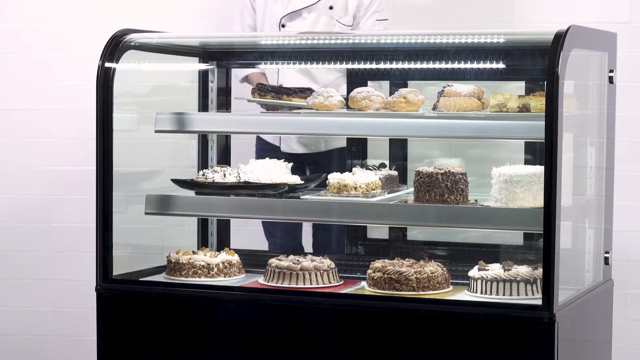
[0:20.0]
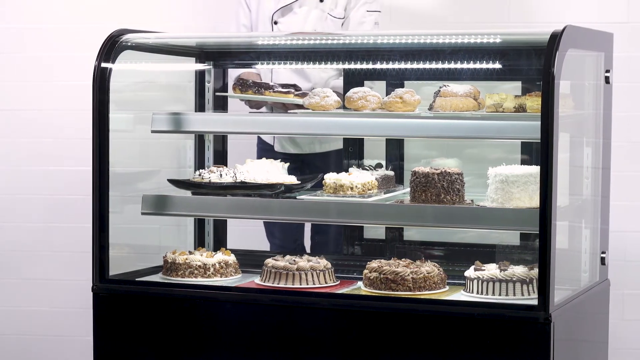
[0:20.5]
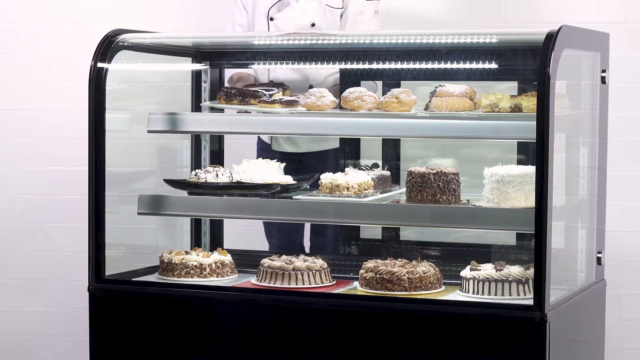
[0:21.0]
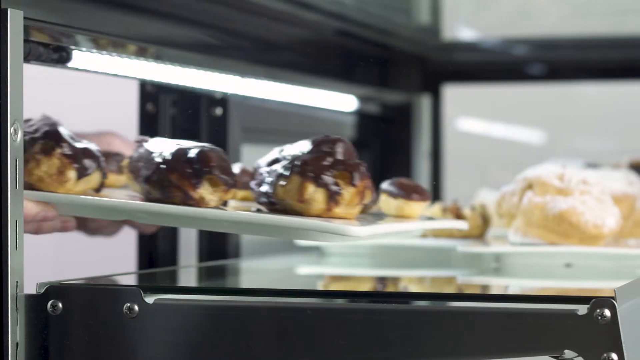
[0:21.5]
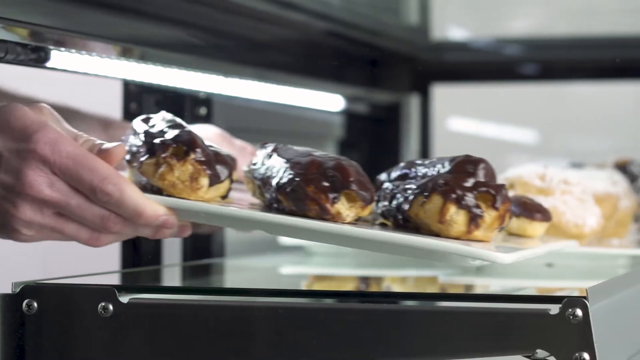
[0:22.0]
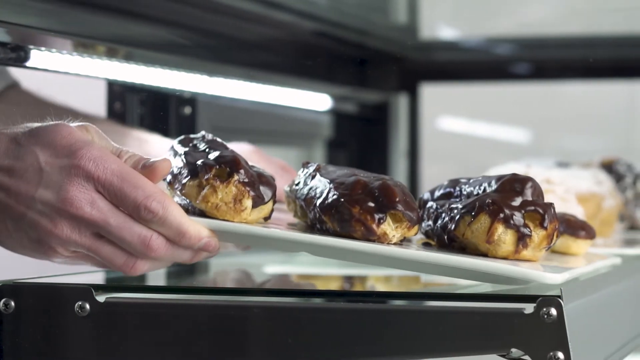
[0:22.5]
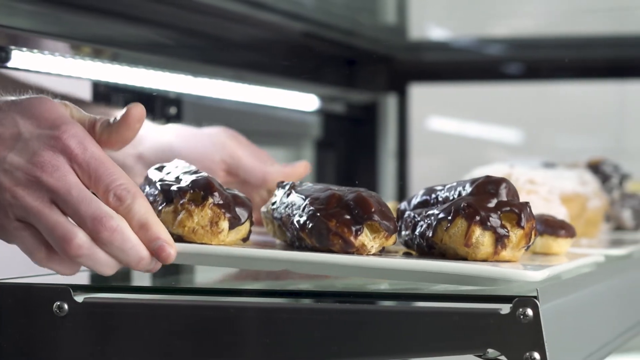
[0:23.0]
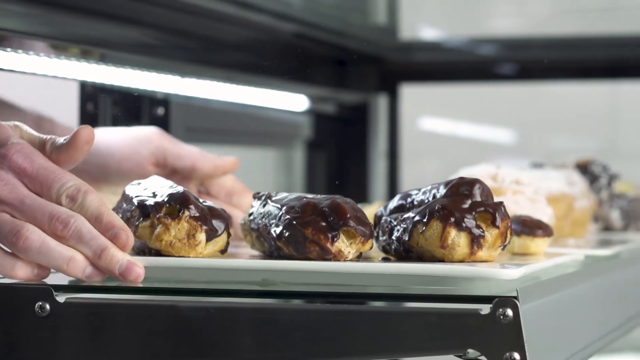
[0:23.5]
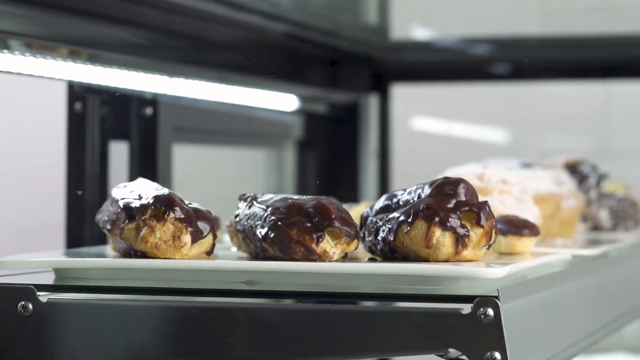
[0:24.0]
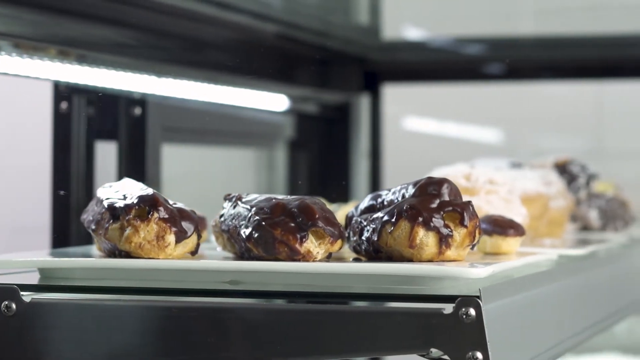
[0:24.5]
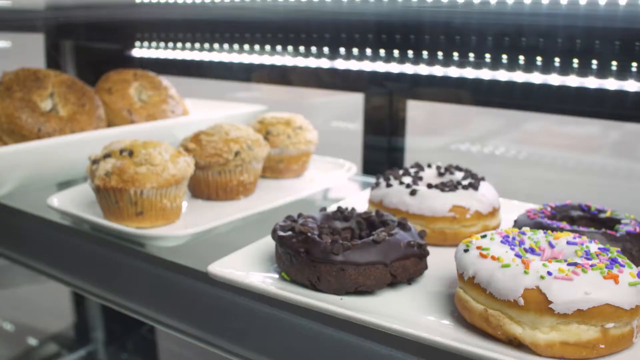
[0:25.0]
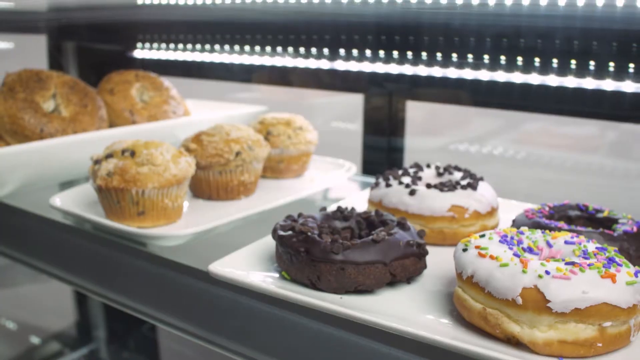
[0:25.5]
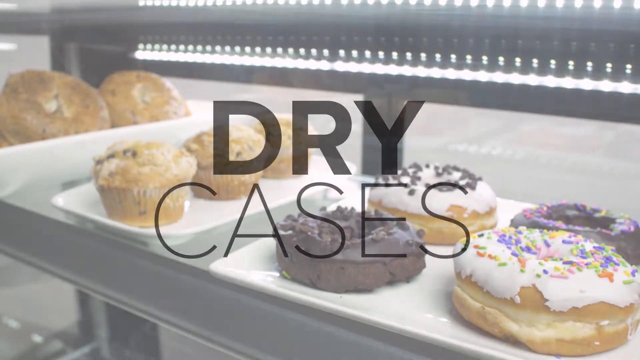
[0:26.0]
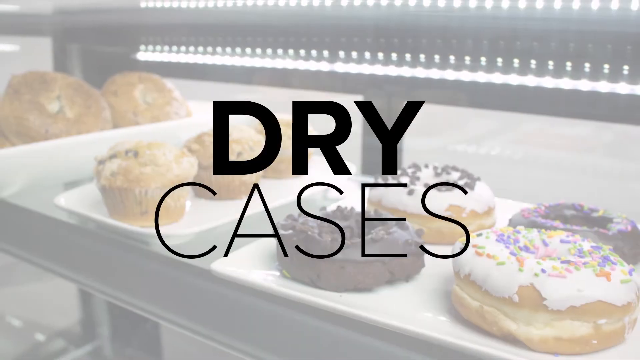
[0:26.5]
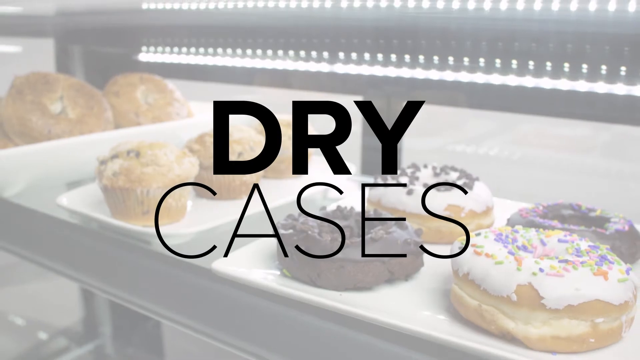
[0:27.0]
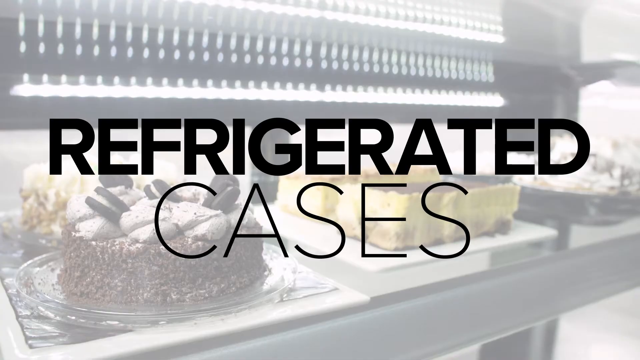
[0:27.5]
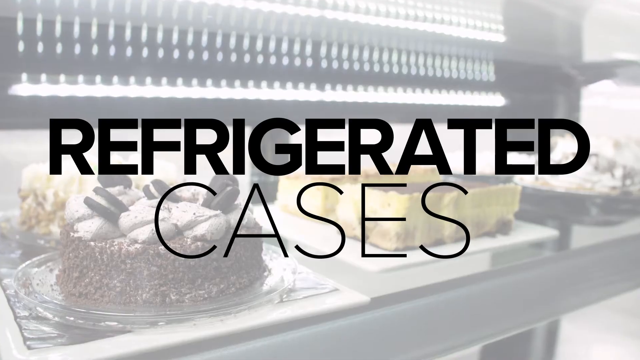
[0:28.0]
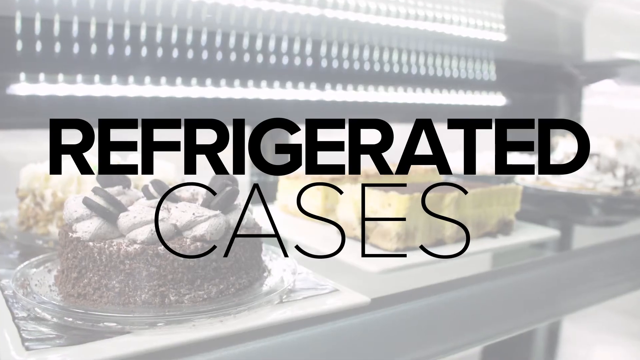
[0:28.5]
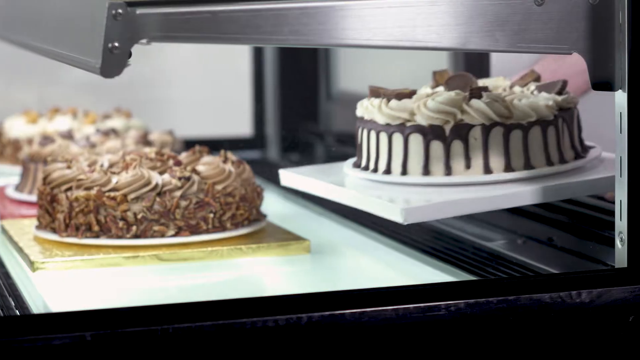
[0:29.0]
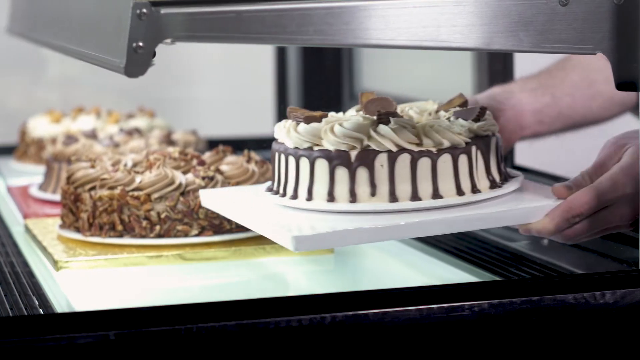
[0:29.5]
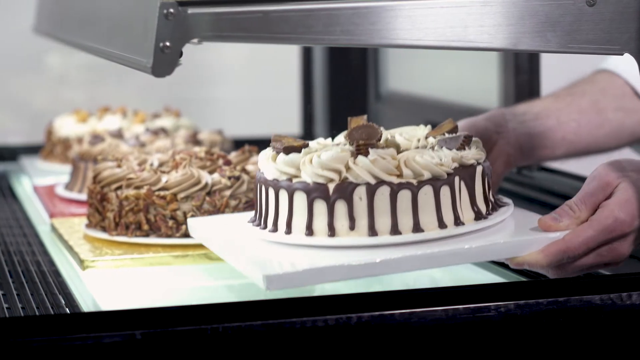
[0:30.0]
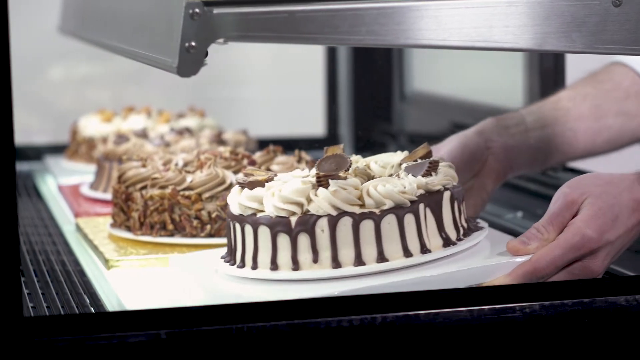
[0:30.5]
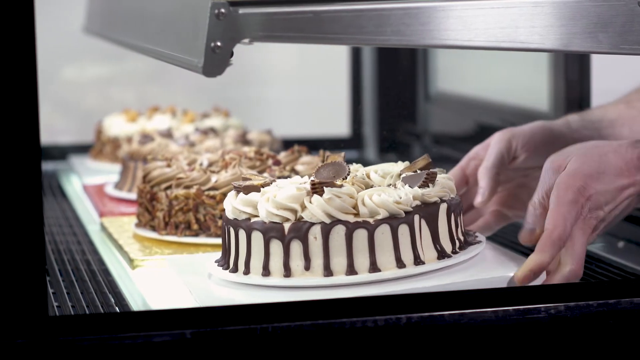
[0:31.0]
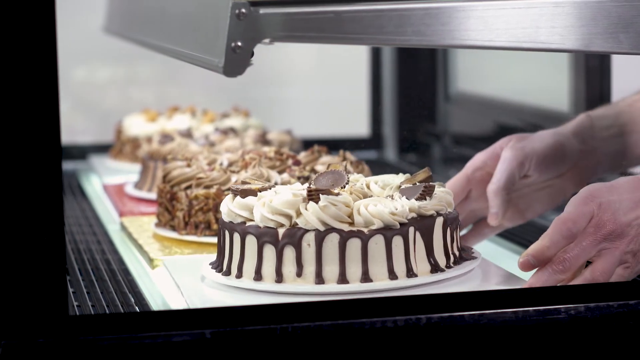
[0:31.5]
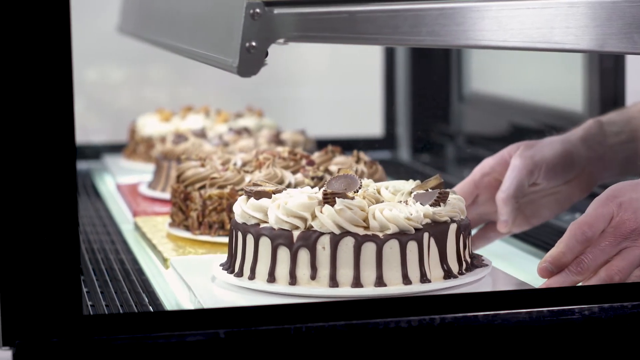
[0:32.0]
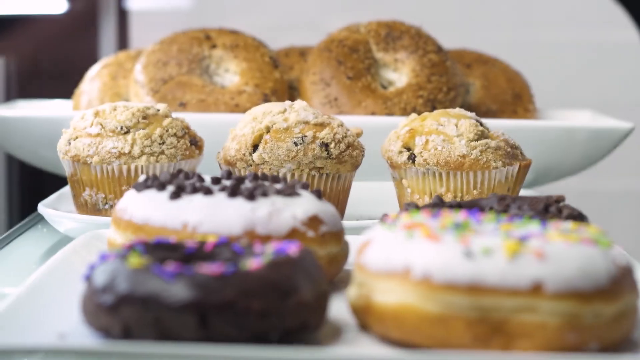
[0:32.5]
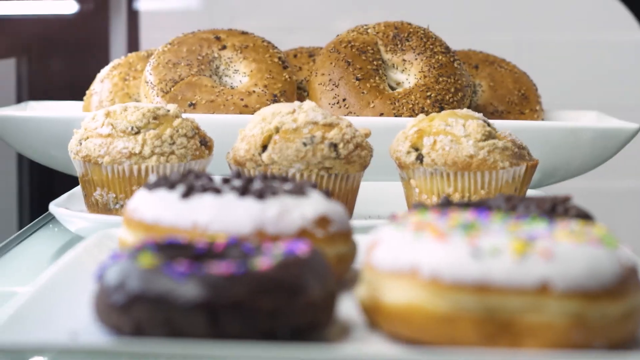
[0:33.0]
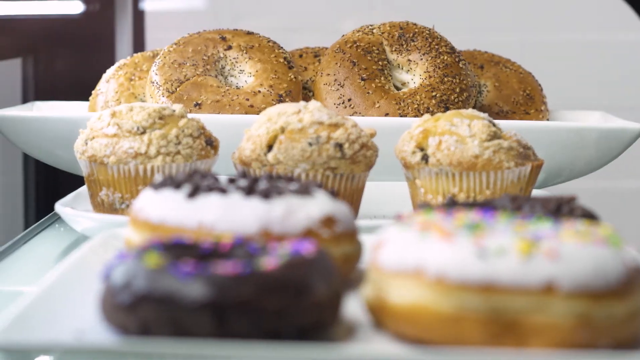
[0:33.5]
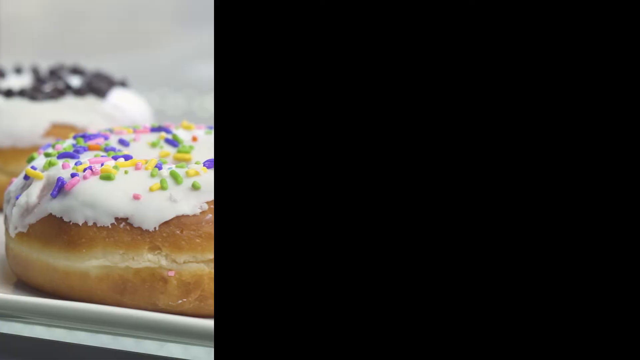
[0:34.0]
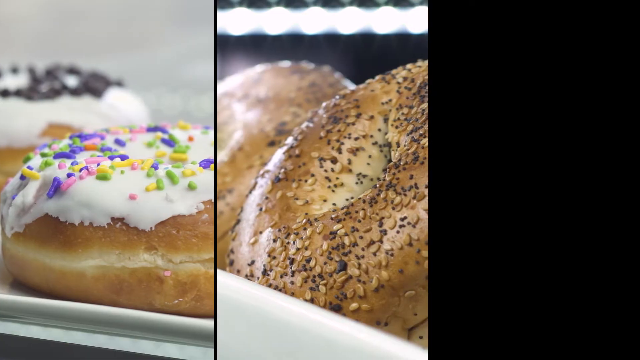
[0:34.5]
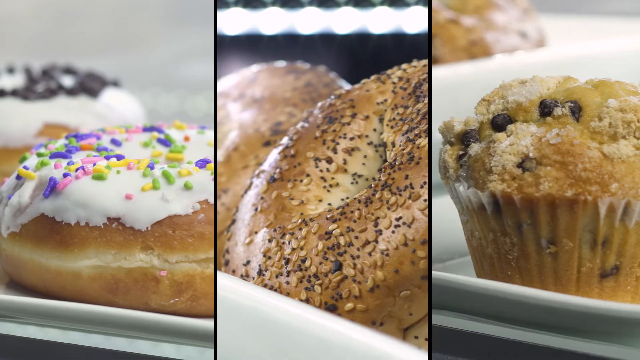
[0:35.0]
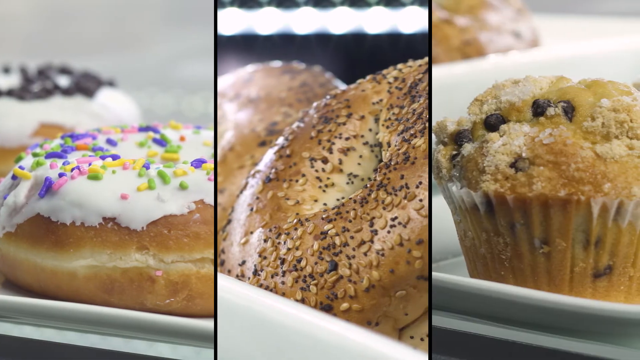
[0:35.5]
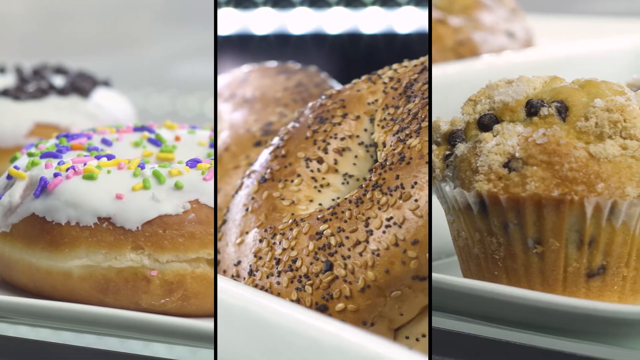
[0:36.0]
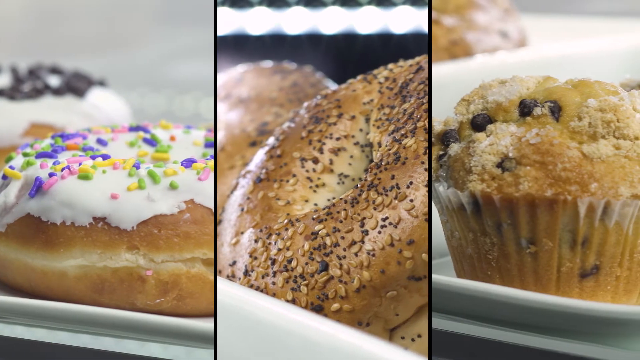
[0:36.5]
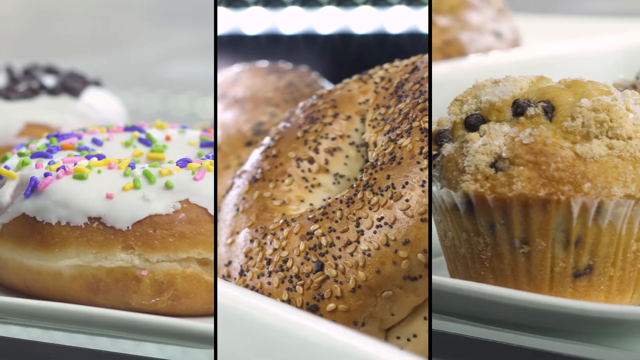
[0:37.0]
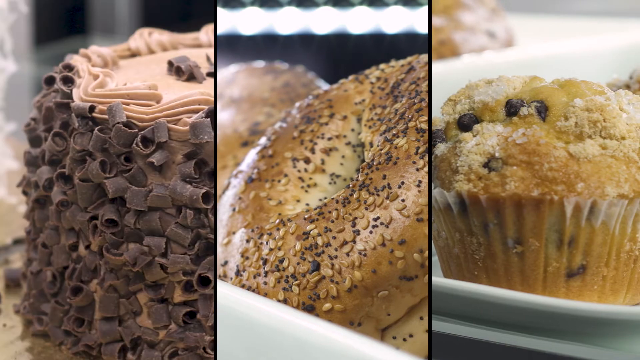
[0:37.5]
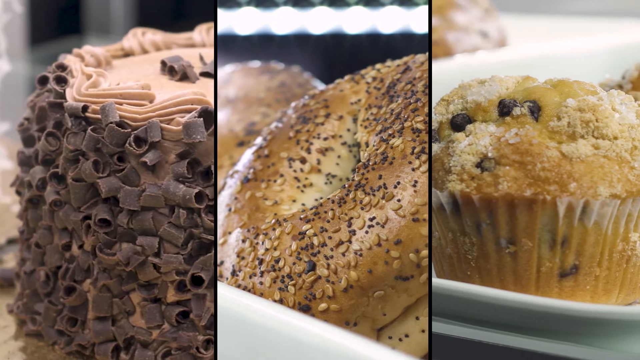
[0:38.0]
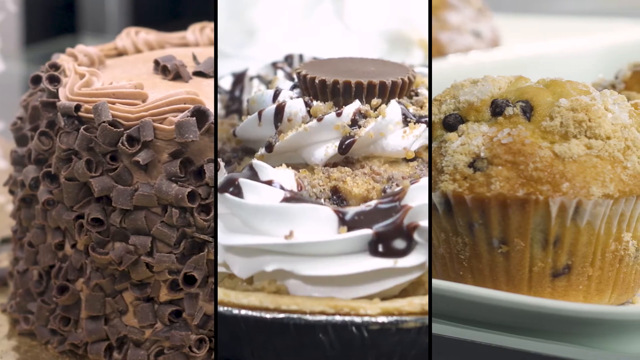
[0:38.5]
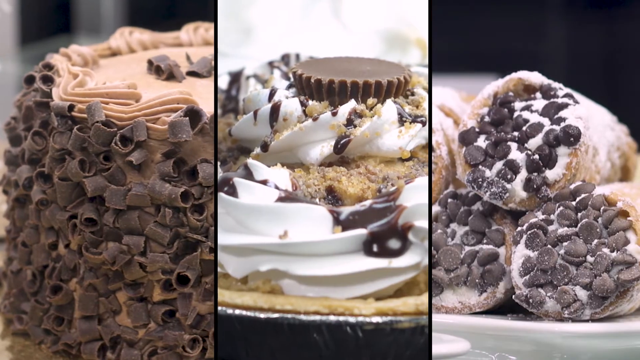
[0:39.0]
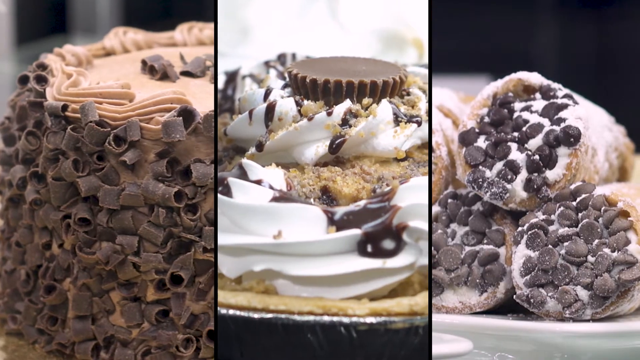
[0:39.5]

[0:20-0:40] Dry cases and refrigerated cases hold different kinds of cakes, along with some breads and donuts. There is an unidentified pastry with filling inside, and another pastry that looks like a muffin, glazed with chocolate on top. A chocolate cake with decoration is also shown, among many types of cakes, including dry cakes with no topping and various muffins.